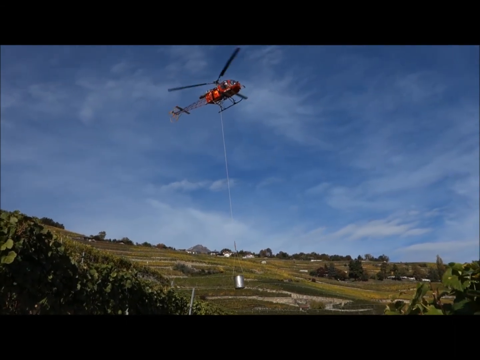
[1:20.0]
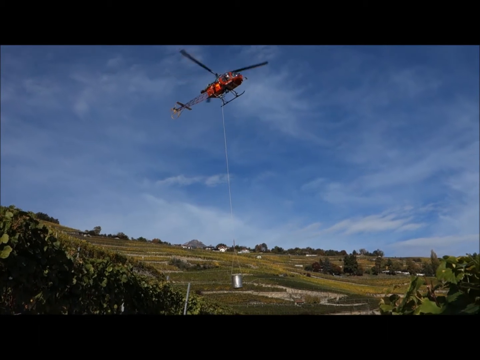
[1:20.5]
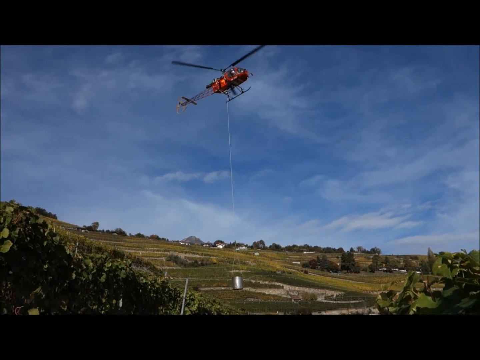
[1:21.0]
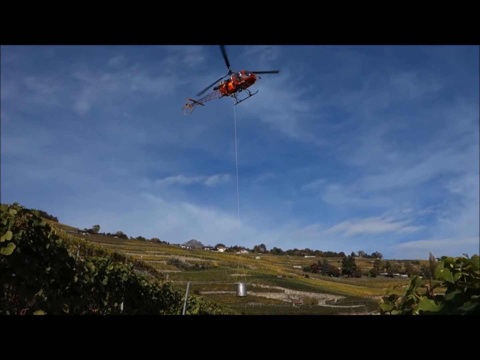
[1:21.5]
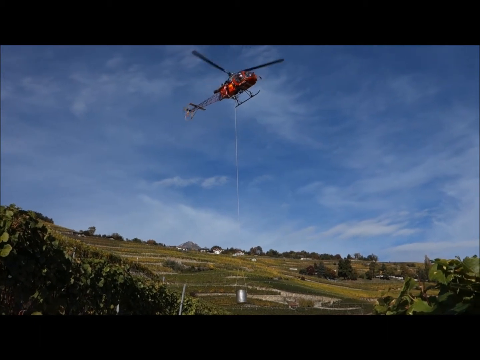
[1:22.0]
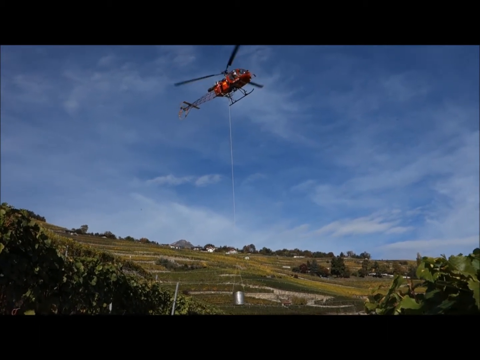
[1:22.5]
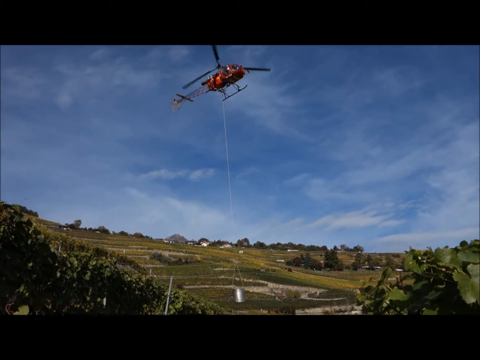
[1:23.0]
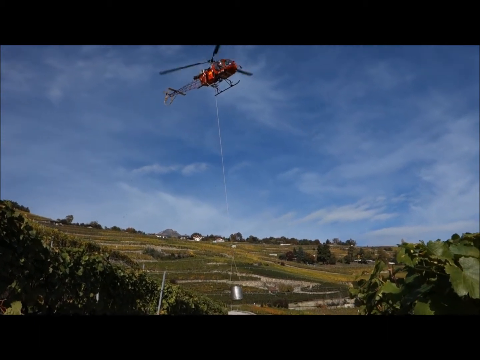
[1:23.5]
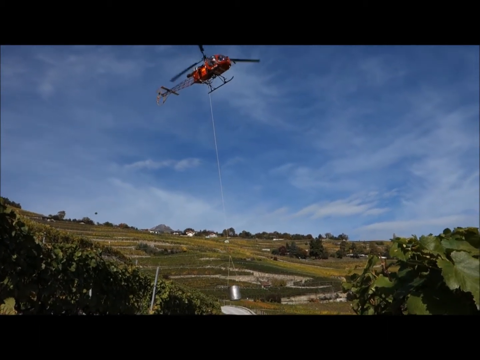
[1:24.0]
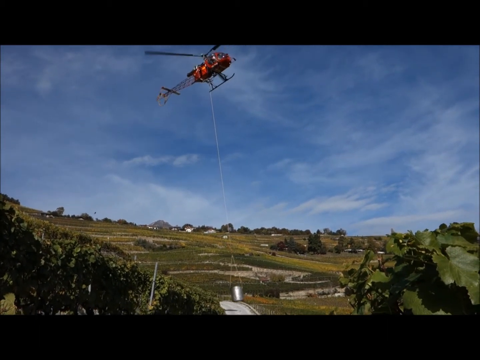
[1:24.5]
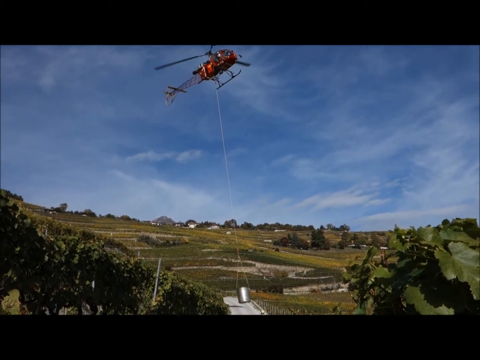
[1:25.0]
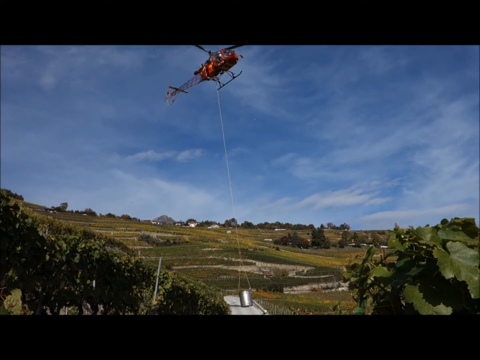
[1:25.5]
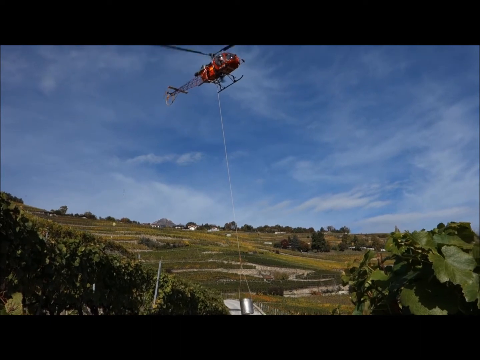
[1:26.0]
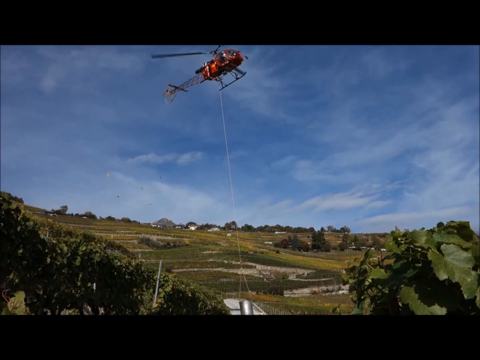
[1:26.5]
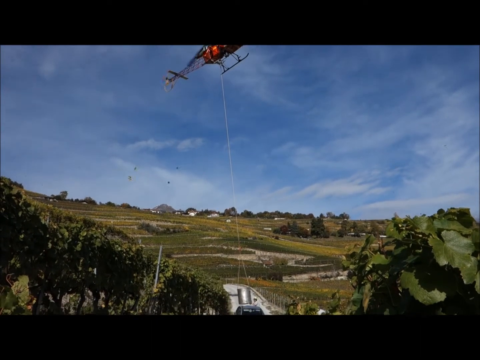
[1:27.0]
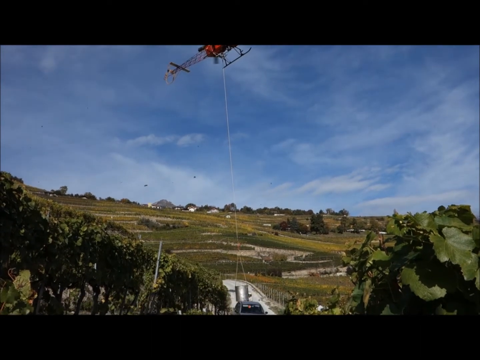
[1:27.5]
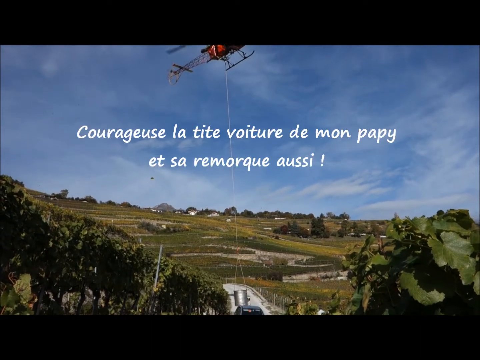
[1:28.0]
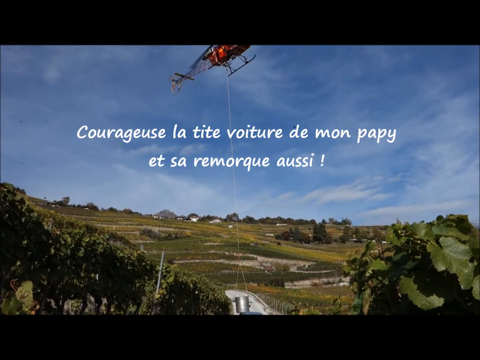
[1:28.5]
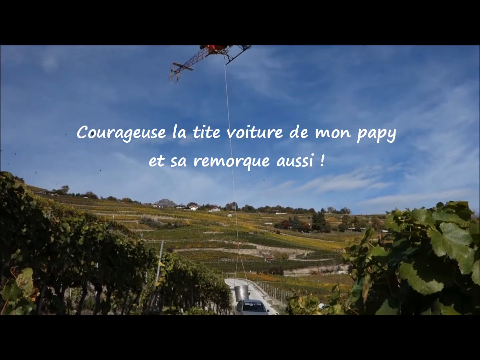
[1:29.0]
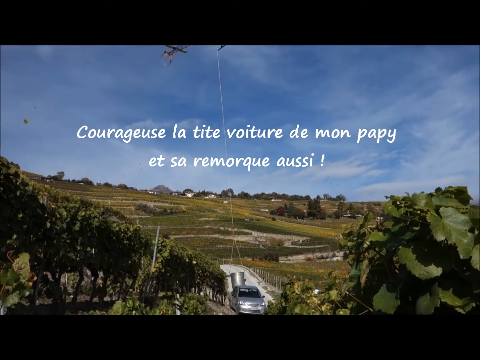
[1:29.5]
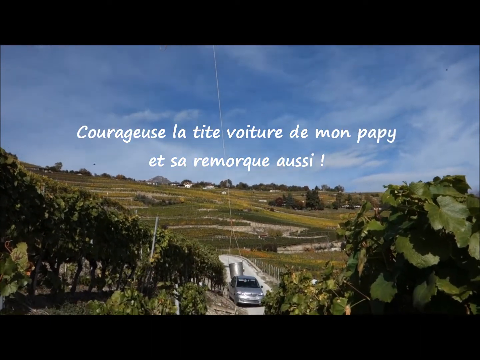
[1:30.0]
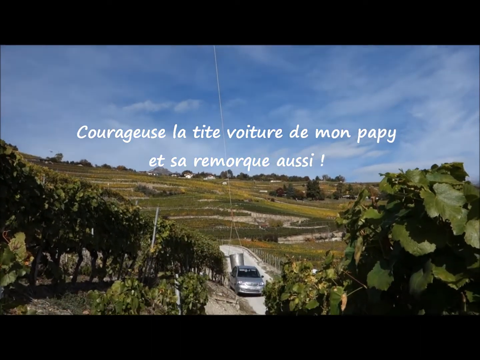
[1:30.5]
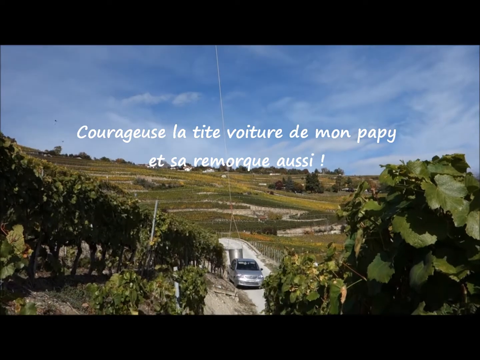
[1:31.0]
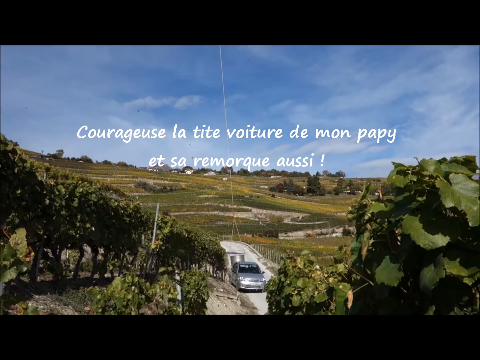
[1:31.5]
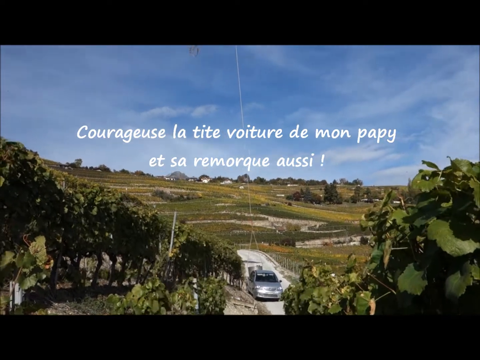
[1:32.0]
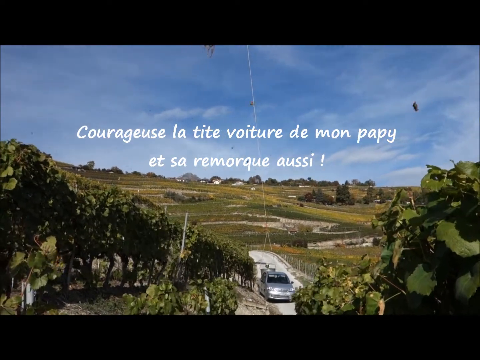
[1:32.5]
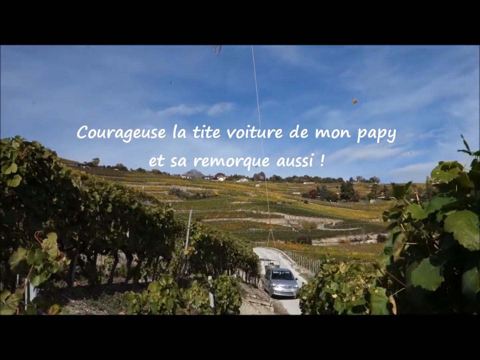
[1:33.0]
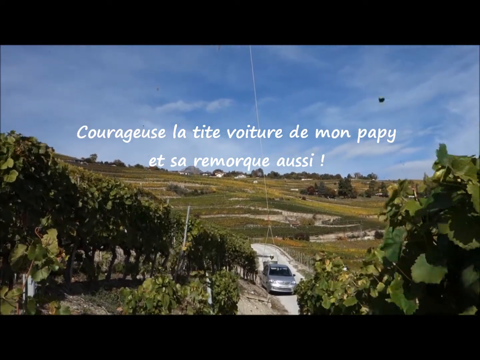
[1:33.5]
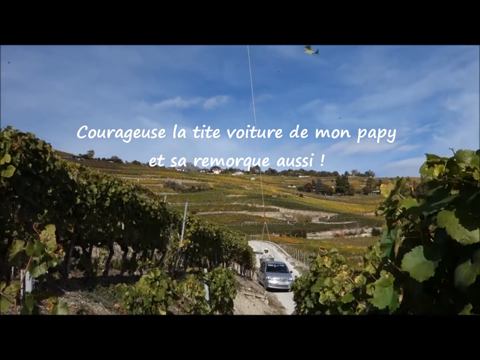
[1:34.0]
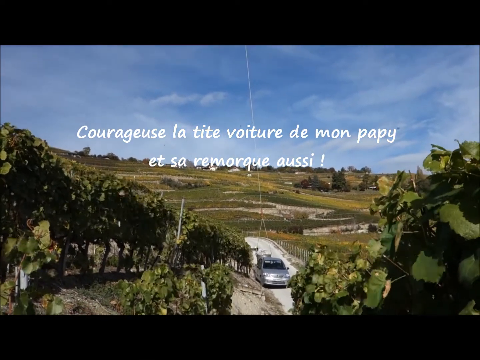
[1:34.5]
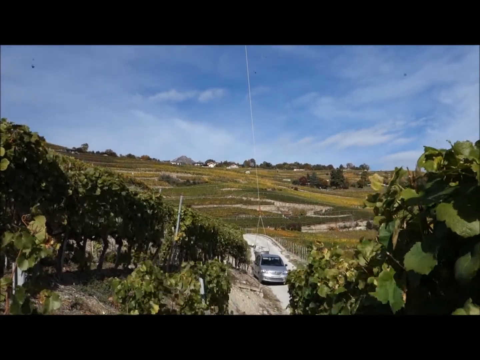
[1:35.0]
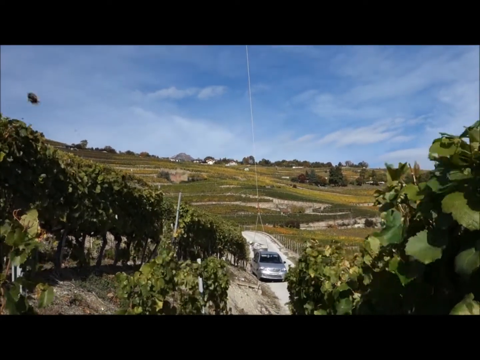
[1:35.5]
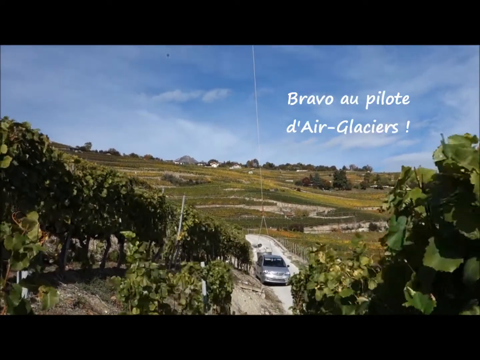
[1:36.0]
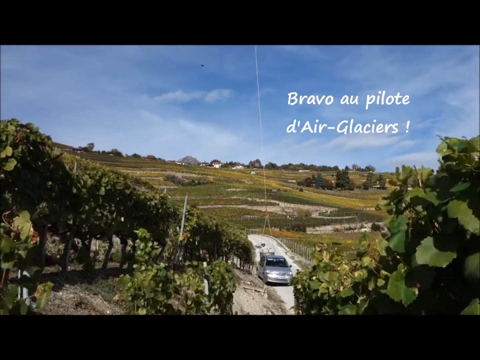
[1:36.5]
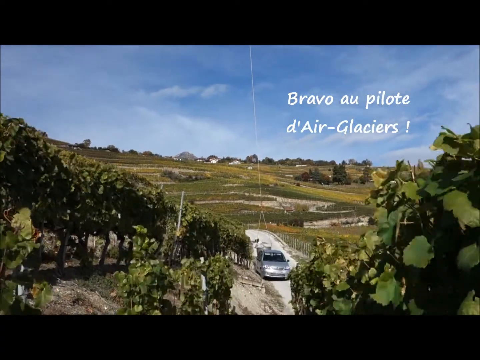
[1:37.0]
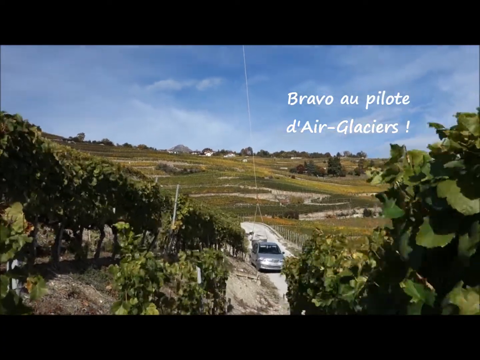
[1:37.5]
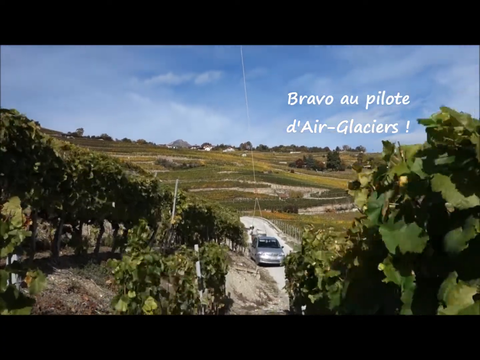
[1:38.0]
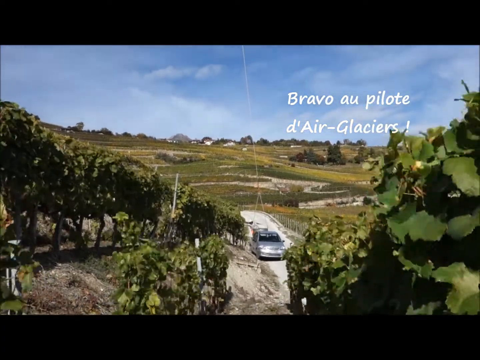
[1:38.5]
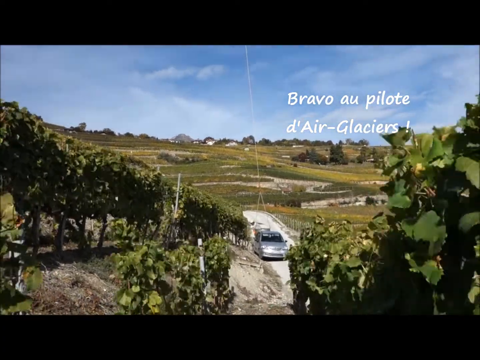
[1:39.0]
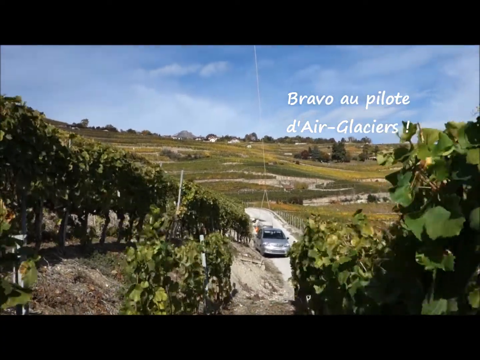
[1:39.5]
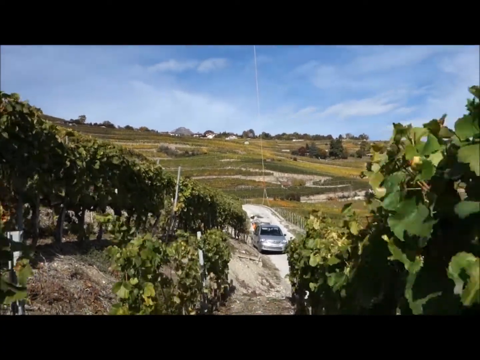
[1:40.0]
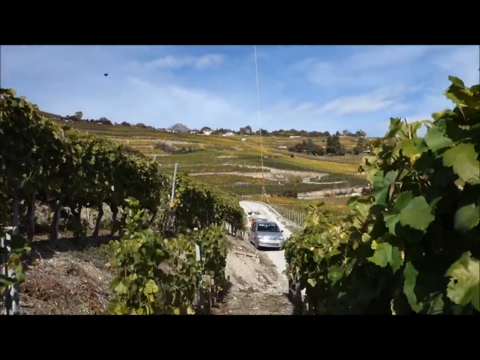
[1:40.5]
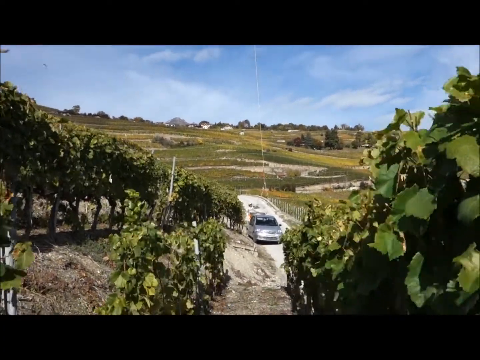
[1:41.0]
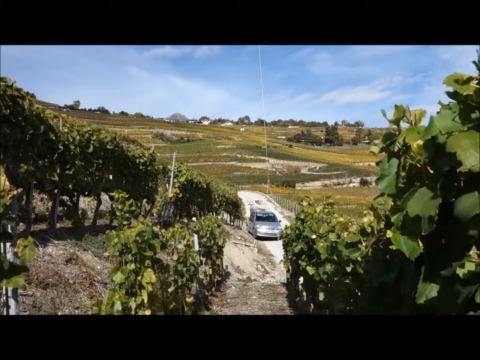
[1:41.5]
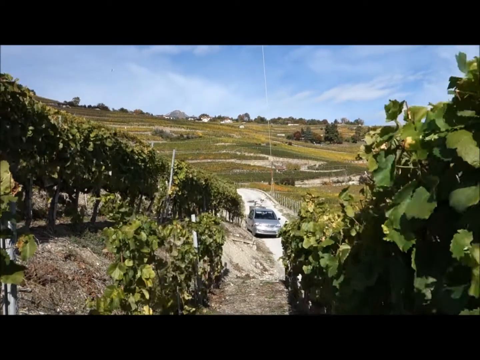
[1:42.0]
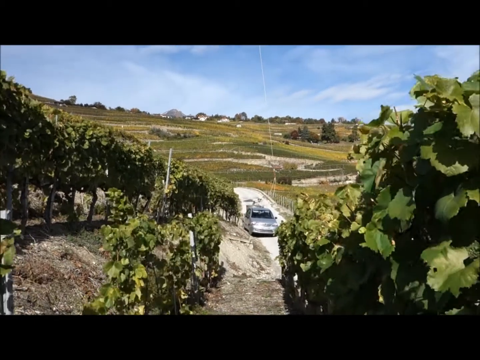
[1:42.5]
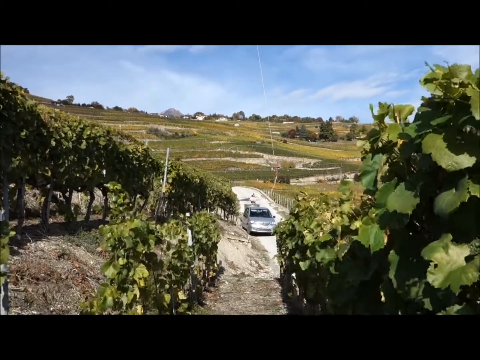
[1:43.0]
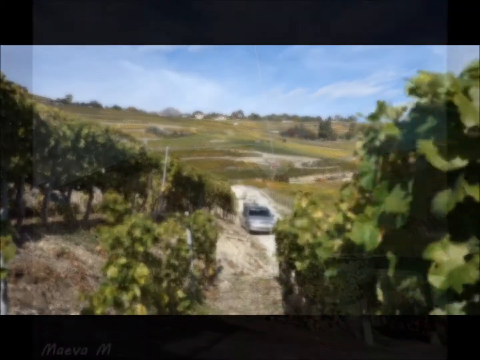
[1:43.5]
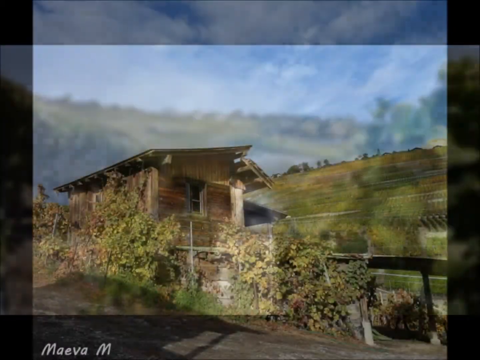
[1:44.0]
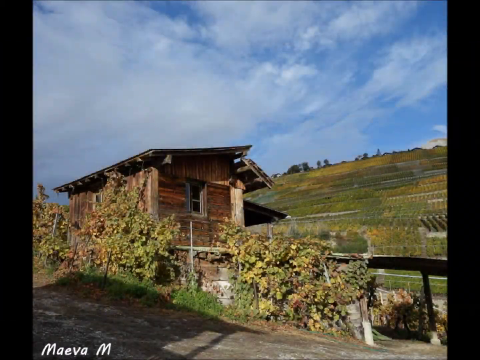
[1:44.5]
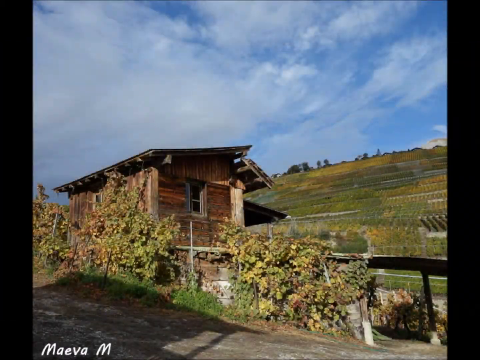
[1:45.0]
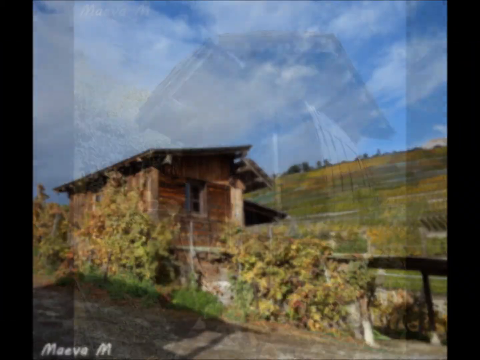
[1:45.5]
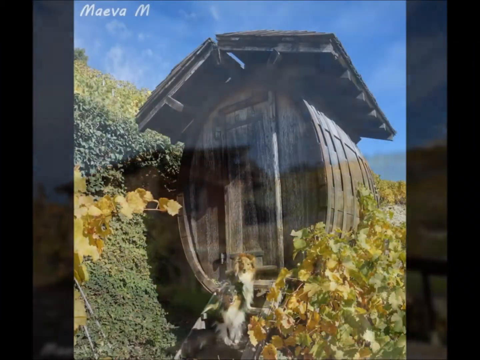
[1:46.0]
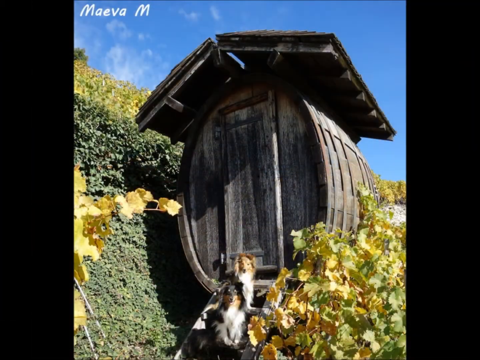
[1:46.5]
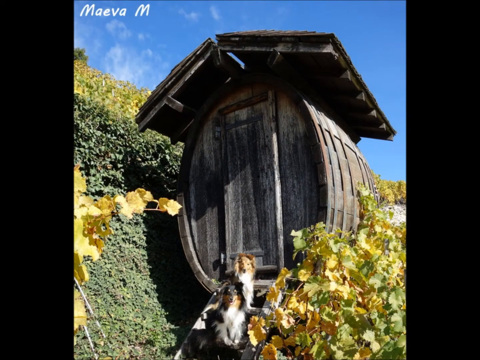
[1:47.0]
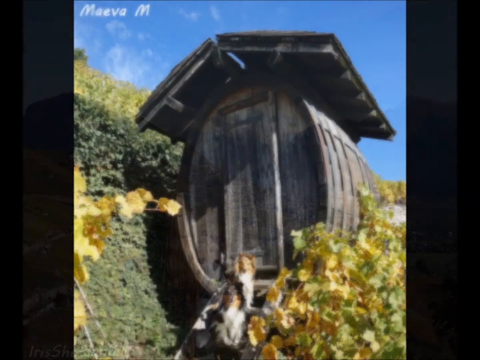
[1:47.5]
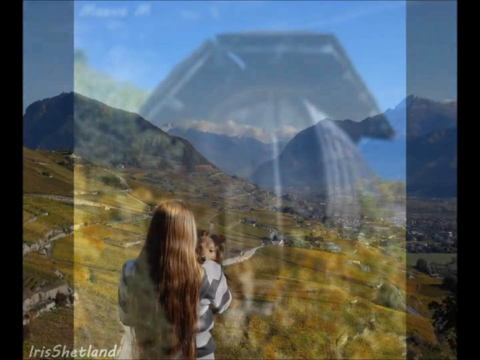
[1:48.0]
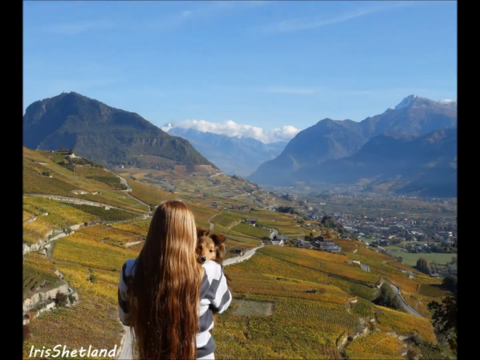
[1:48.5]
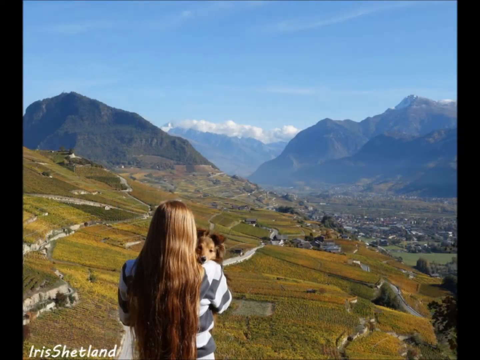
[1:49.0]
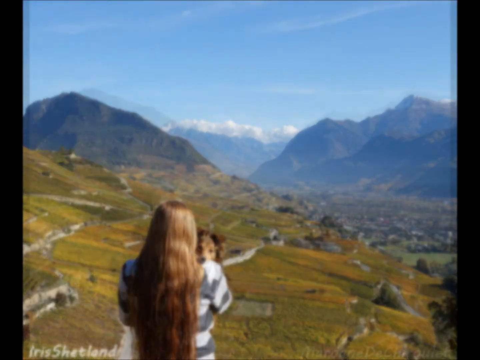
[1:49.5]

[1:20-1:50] The helicopter is in the sky with a bucket attached on a long rope, and it lowers the bucket down; French text is on the screen, and it is unclear what the helicopter is doing. It brings the bucket down next to a silver car parked on a road in the vineyards. The video switches to a picture of a little wooden house or structure in the vineyards next to a hill. Another picture shows what actually looks like a large barrel, with a dog kind of standing up on it, sniffing it. A picture shows a woman with long reddish-brown hair facing the fields, greenery and mountains while holding one of the dogs, whose face is over her shoulder looking into the camera. A similar picture follows with the other, darker dog.